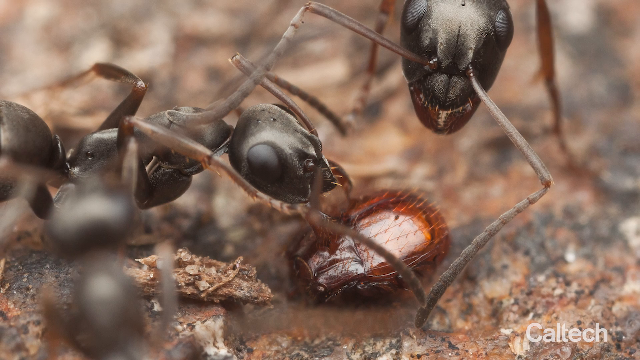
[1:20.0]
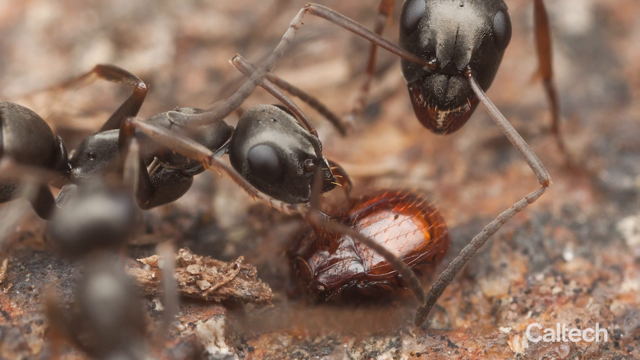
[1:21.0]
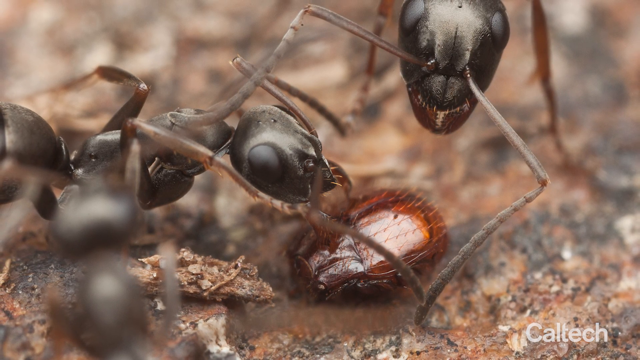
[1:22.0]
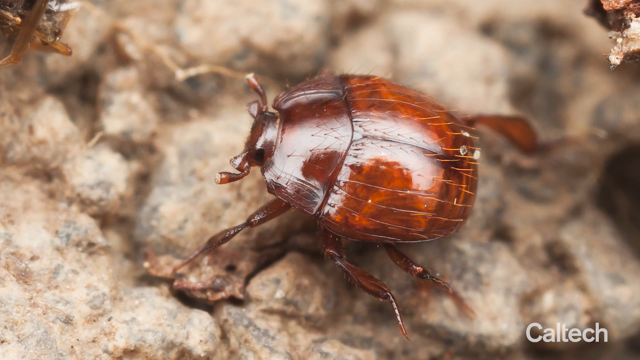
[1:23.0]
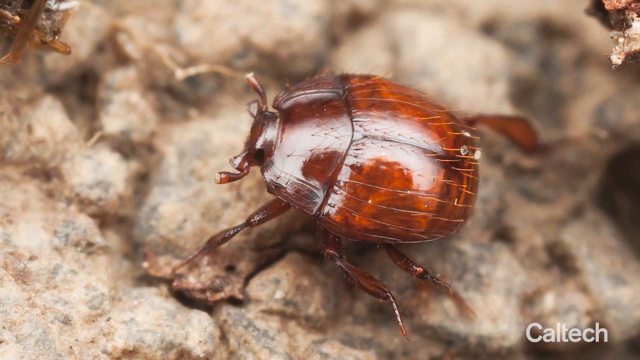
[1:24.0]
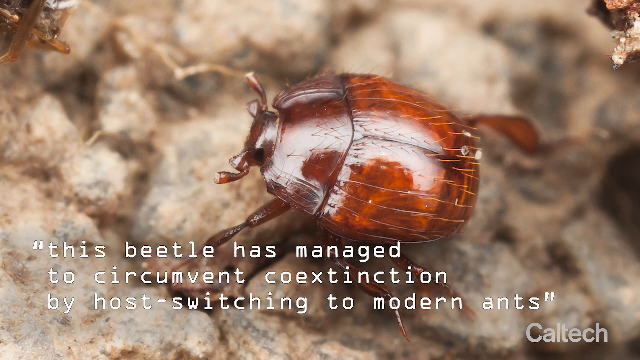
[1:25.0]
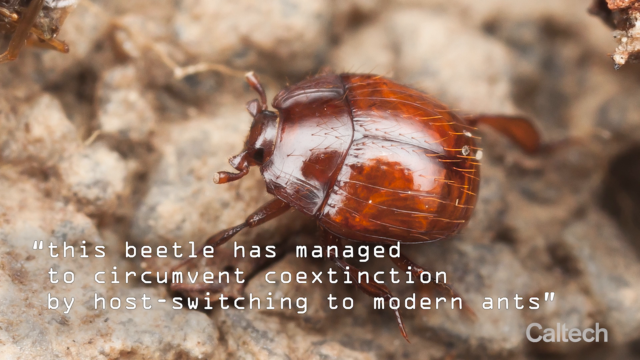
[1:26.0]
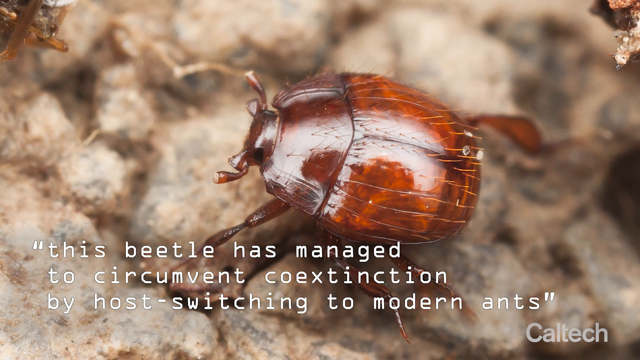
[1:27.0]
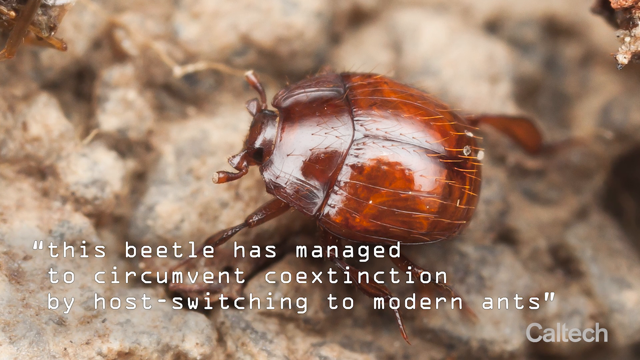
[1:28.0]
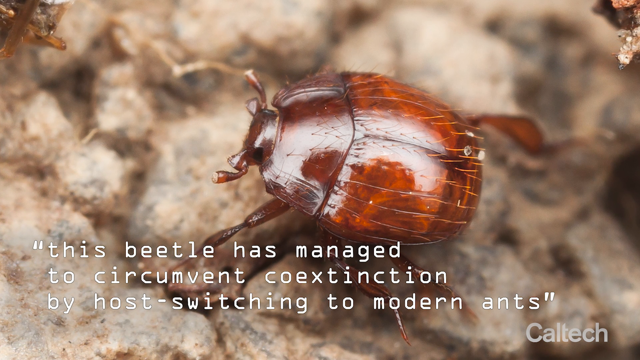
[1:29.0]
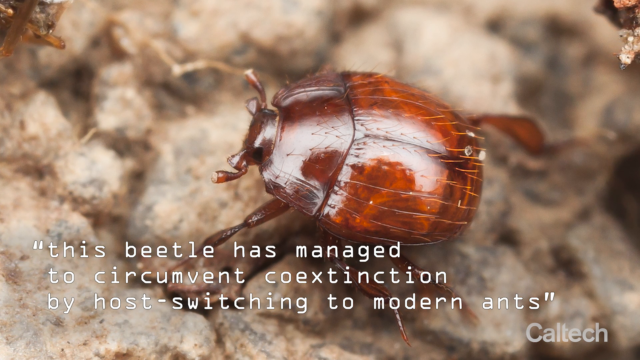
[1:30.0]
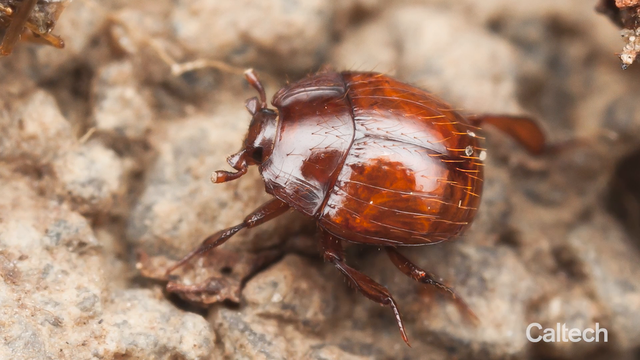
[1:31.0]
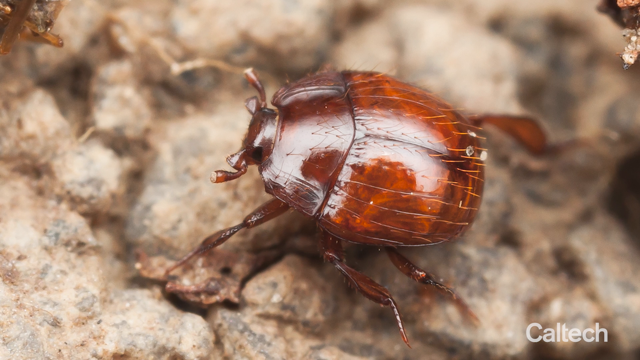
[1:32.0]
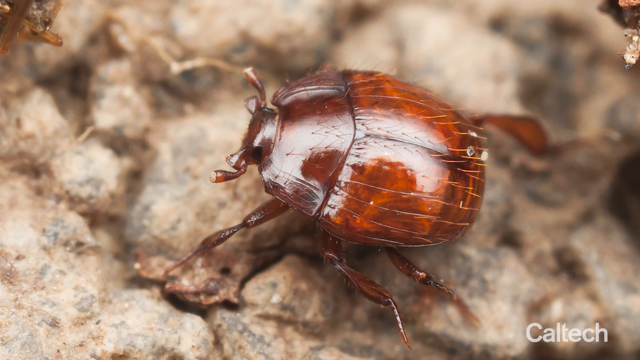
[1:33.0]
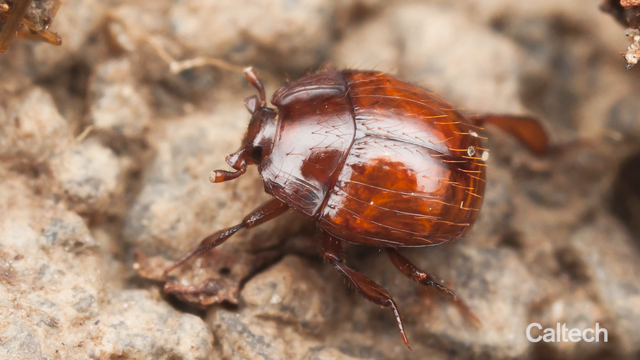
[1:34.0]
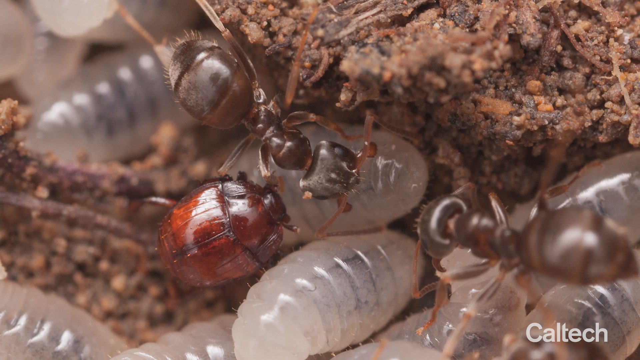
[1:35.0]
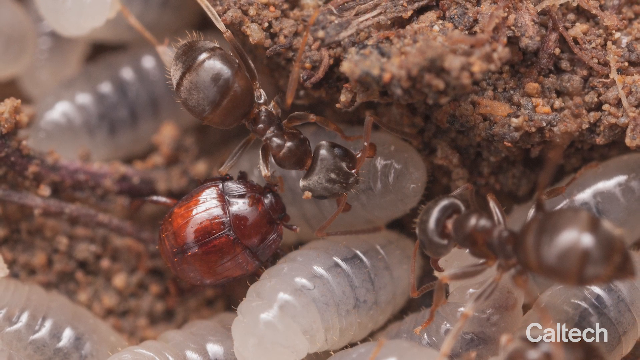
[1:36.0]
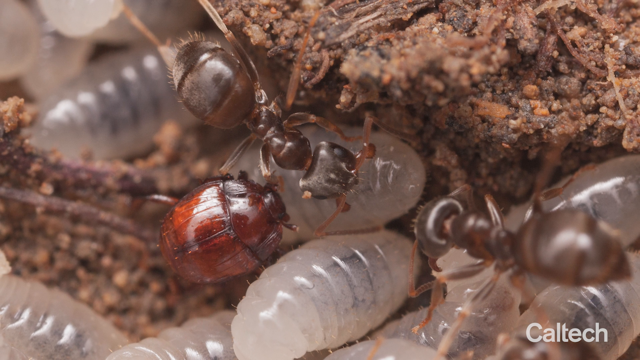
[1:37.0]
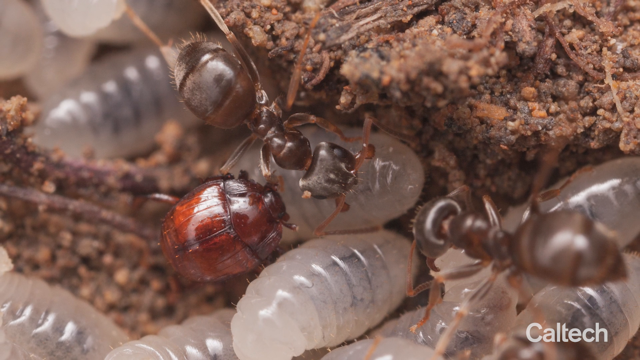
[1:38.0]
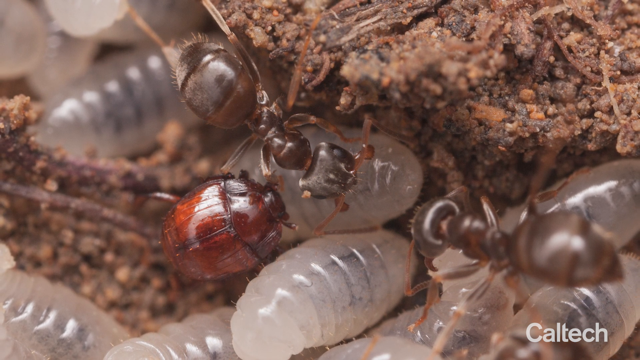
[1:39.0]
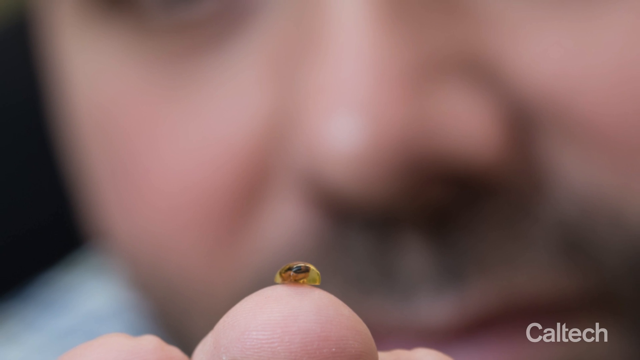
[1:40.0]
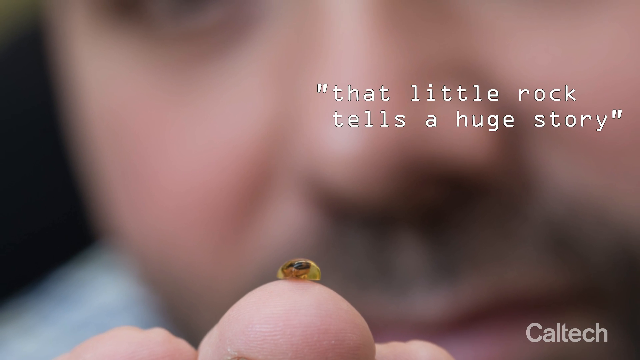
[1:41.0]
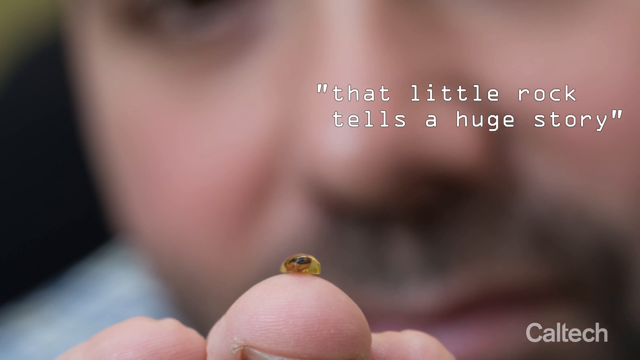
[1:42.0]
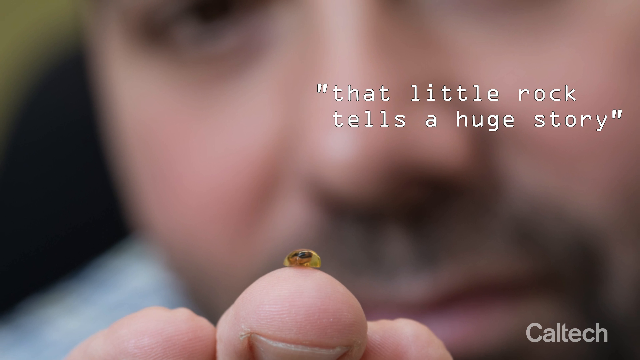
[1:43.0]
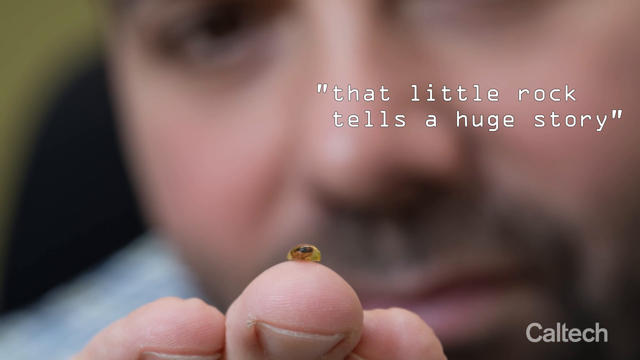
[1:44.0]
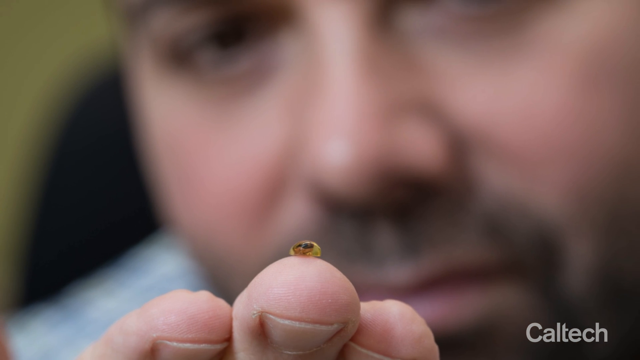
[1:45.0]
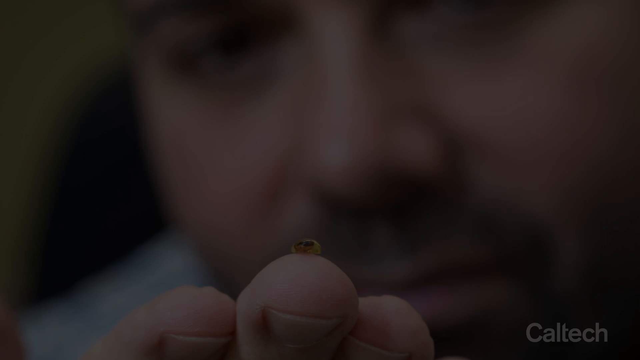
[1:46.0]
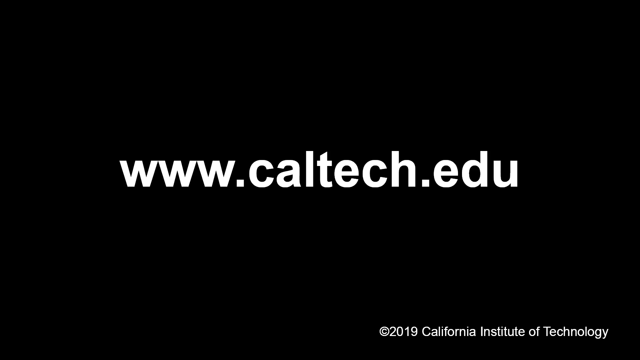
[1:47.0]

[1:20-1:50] A still picture shows a couple of ants molesting a piece of amber on the dirt. It changes to a brown beetle, and text in the lower part of the screen reads "This beetle has managed to circumvent co-extinction by host switching to modern ants." The view zooms in a bit on the tan and brown beetle, then changes to larvae stuck in a crevice in the dirt, with a beetle visible in the lower left and an ant over the ant larvae; they are coexisting and not attacking each other. A call-out quote appears before a blurred image of a human face, reading "That little rock tells a huge story." The video ends with the URL caltech.edu.